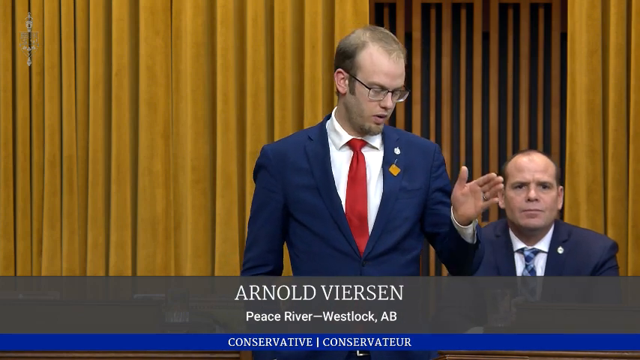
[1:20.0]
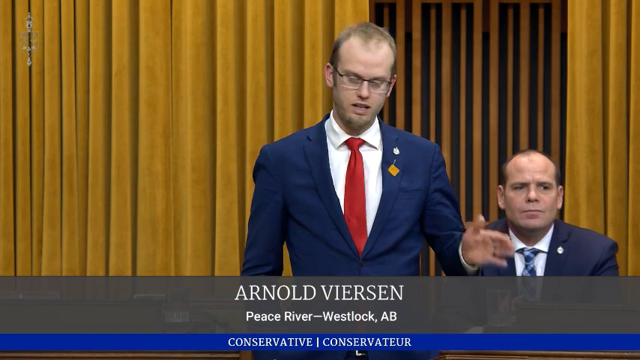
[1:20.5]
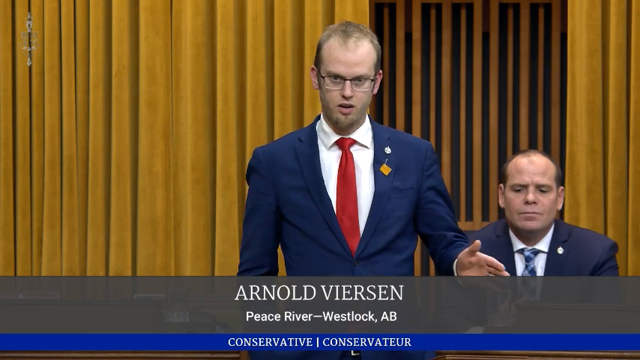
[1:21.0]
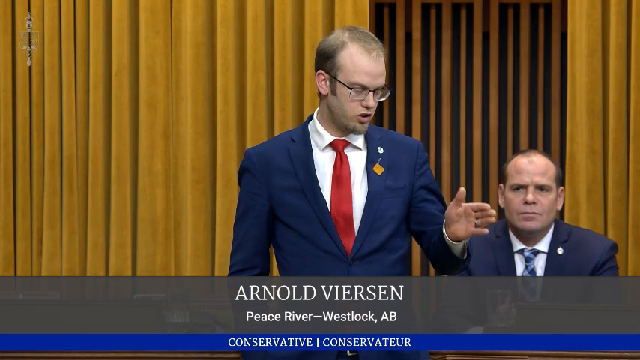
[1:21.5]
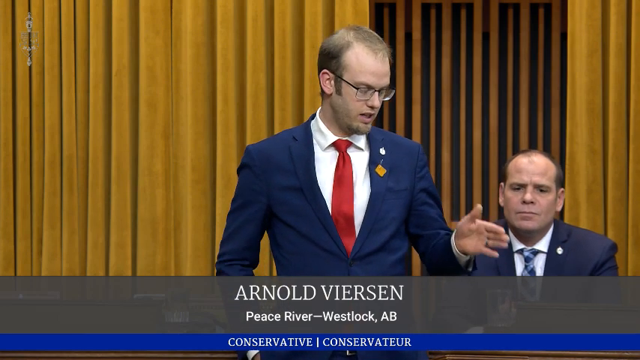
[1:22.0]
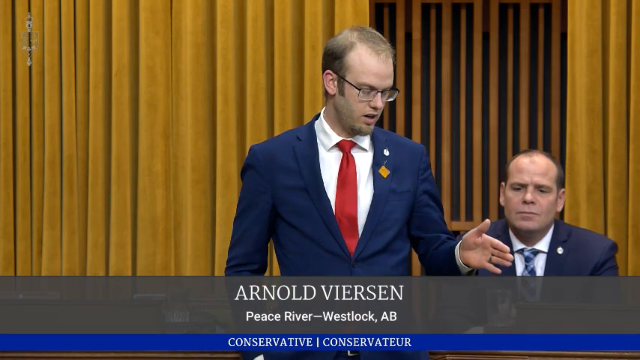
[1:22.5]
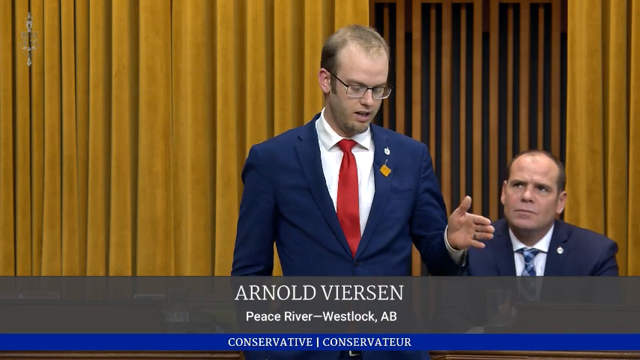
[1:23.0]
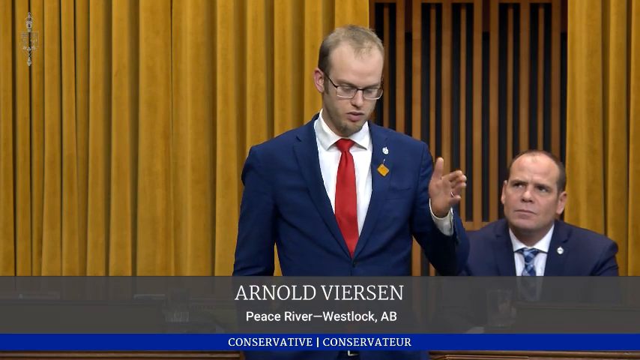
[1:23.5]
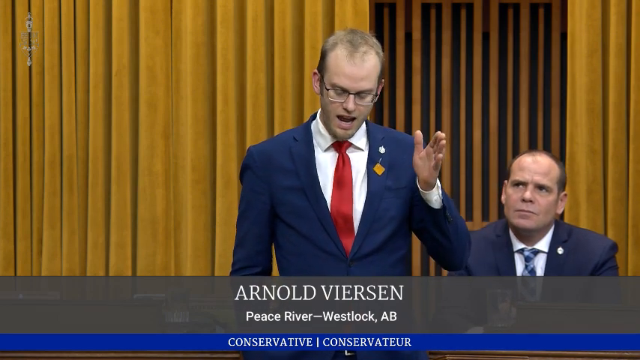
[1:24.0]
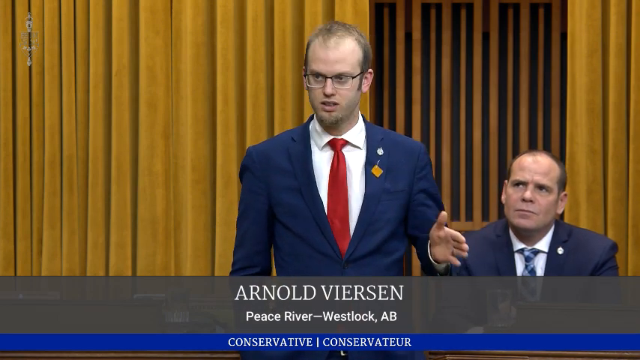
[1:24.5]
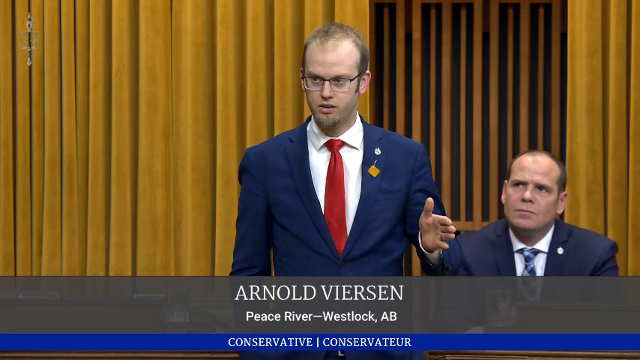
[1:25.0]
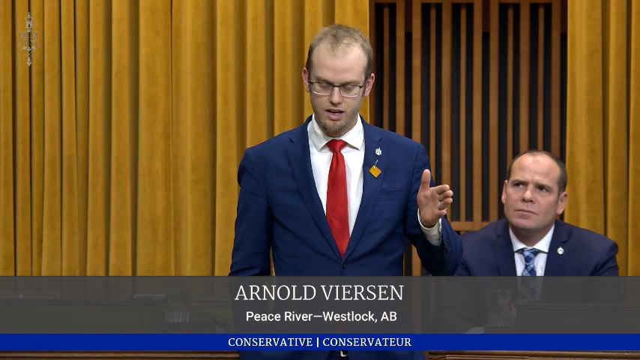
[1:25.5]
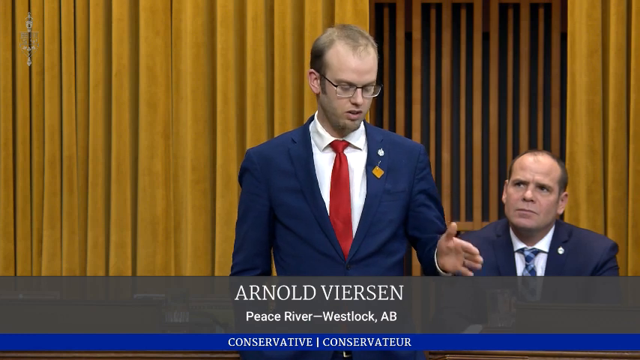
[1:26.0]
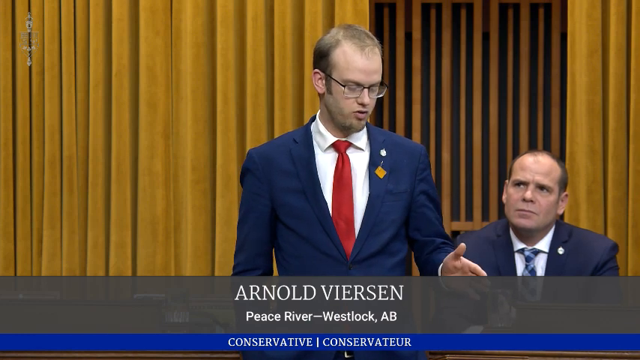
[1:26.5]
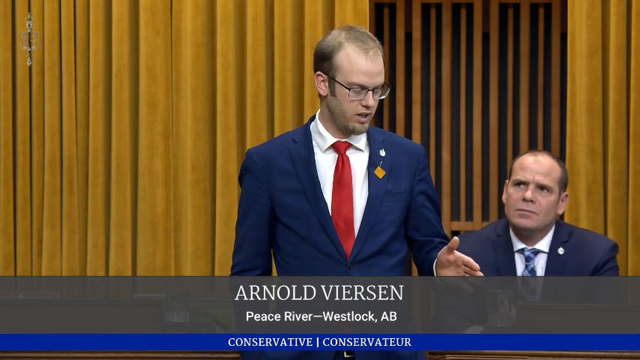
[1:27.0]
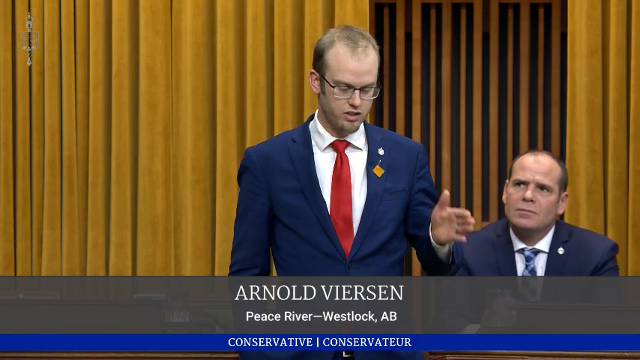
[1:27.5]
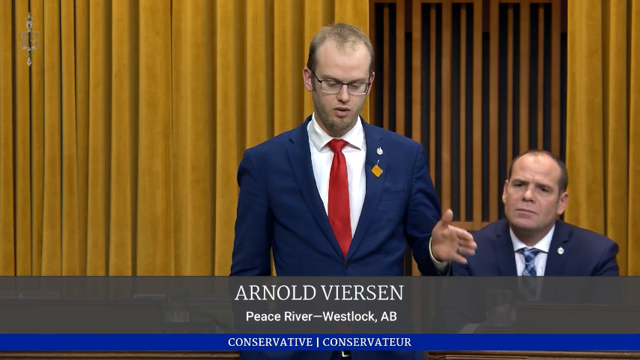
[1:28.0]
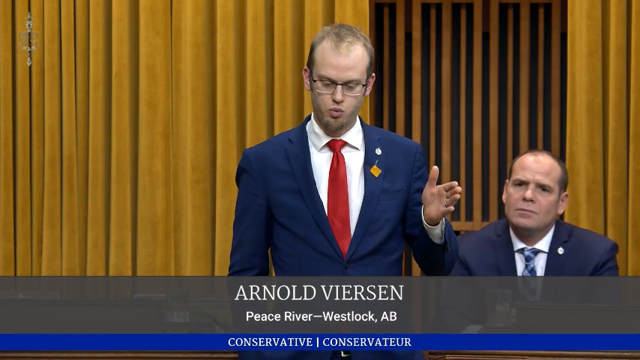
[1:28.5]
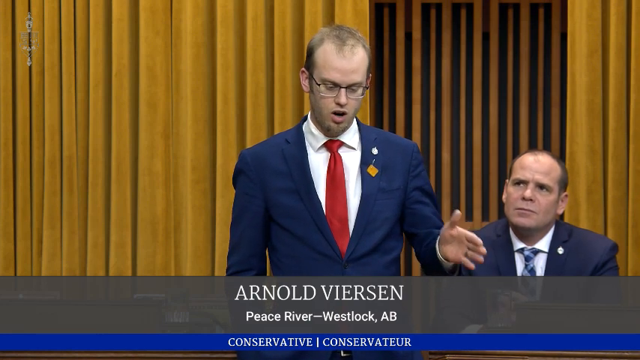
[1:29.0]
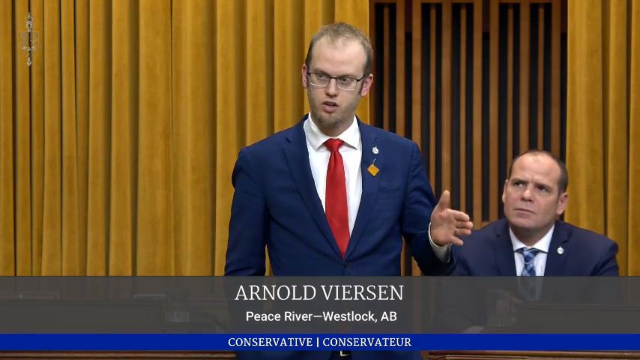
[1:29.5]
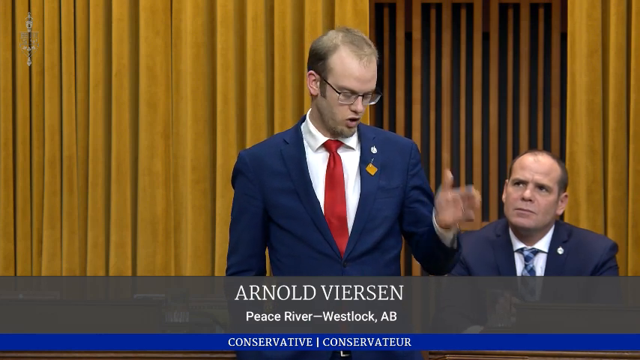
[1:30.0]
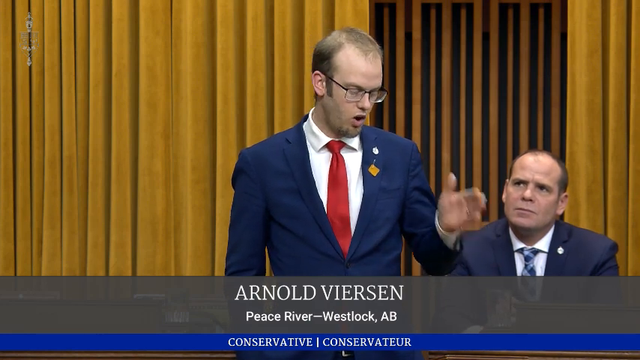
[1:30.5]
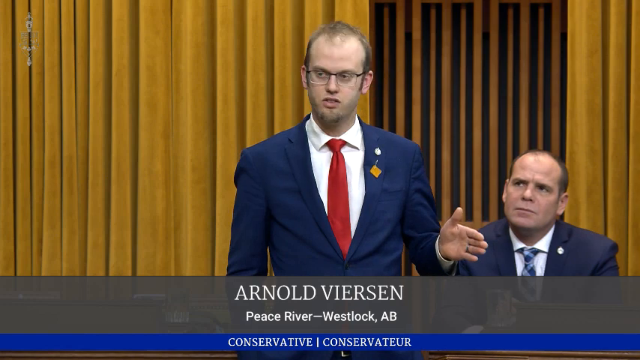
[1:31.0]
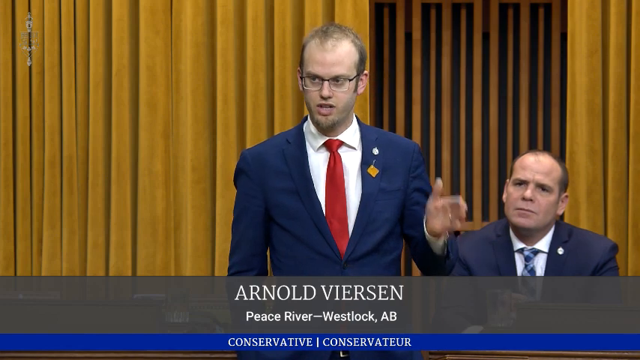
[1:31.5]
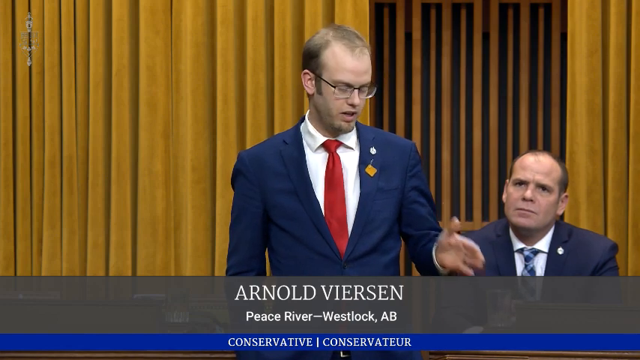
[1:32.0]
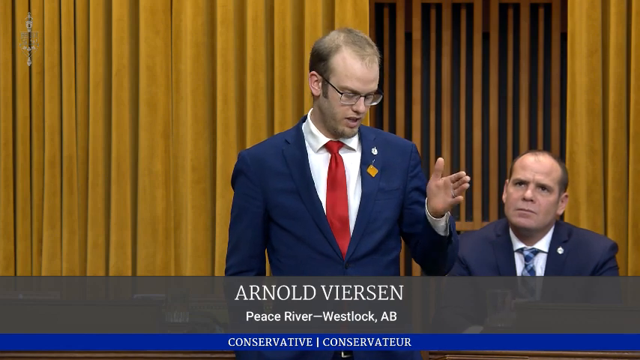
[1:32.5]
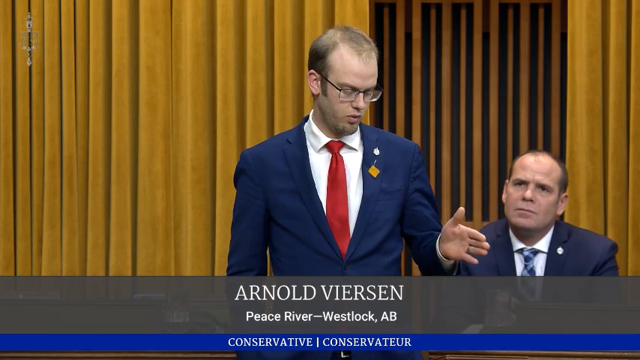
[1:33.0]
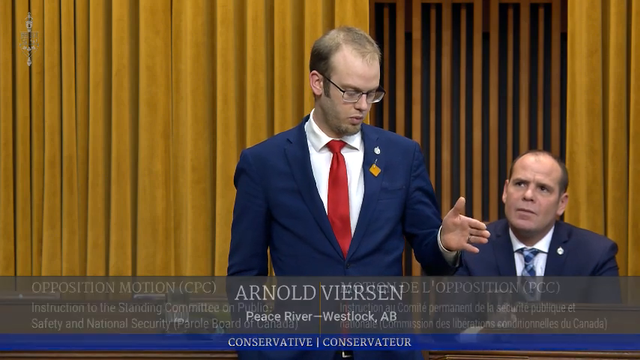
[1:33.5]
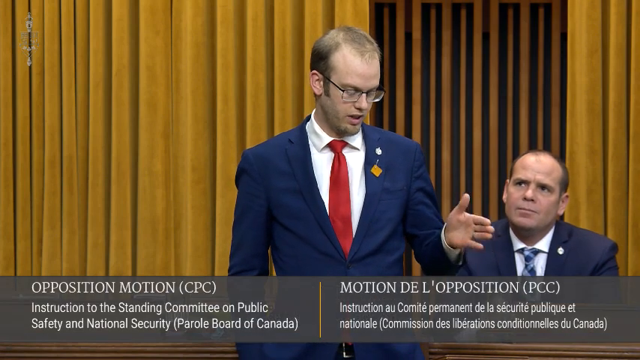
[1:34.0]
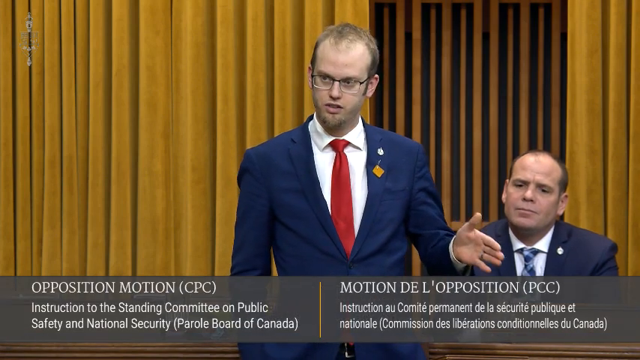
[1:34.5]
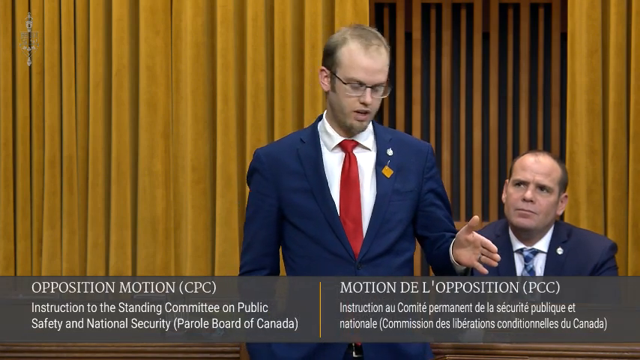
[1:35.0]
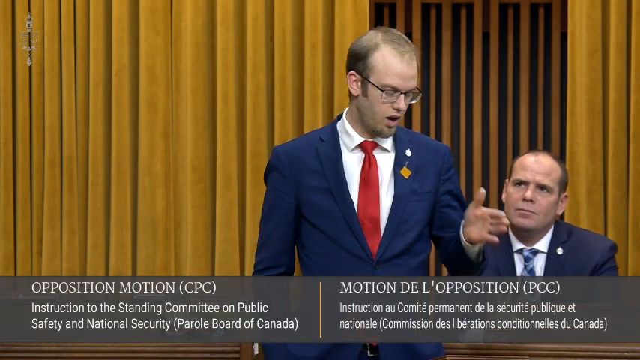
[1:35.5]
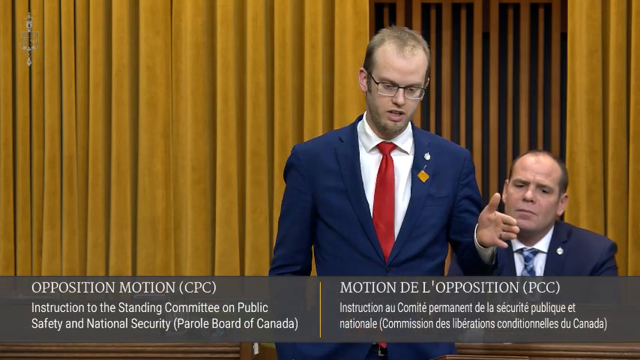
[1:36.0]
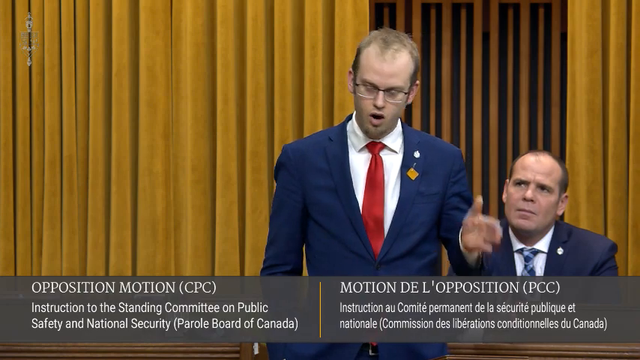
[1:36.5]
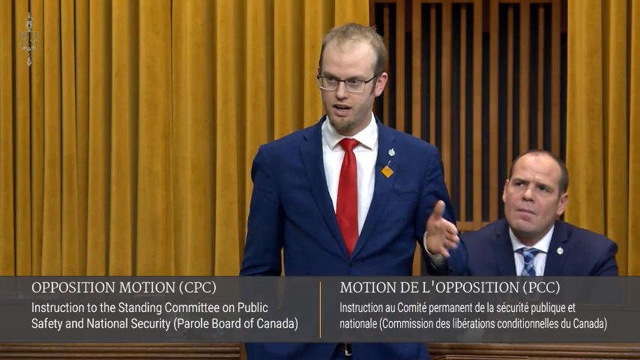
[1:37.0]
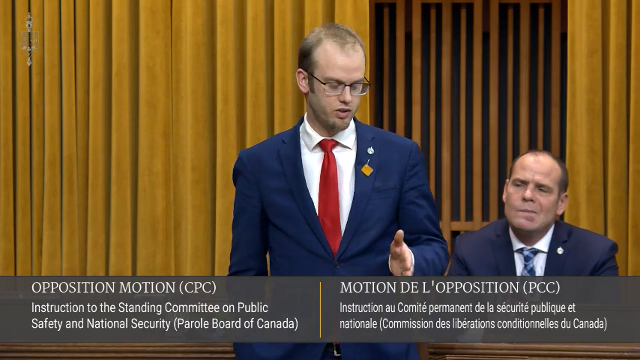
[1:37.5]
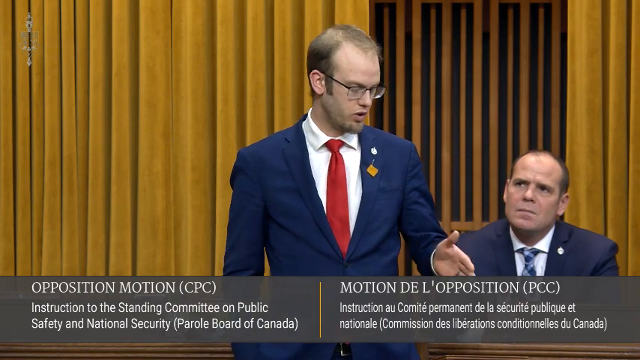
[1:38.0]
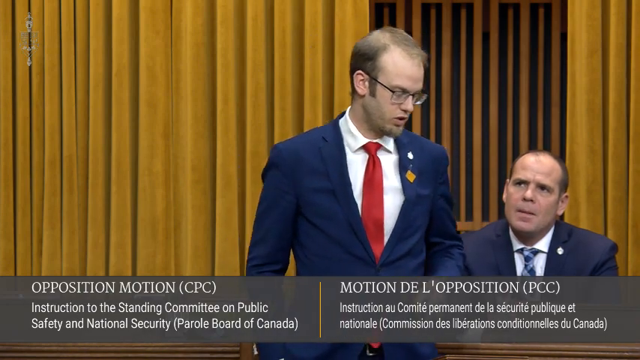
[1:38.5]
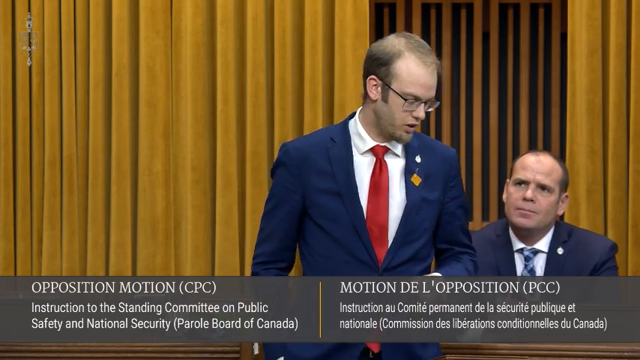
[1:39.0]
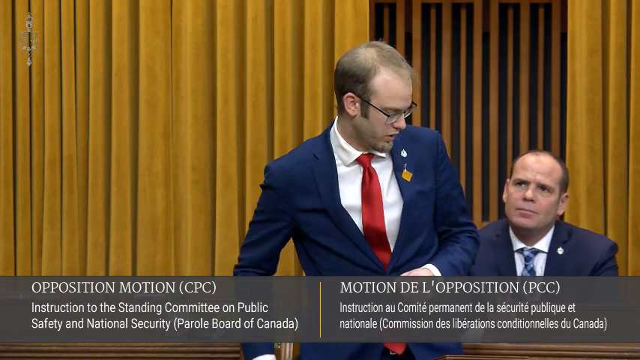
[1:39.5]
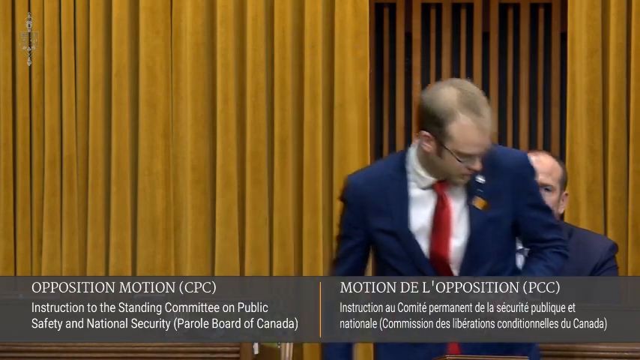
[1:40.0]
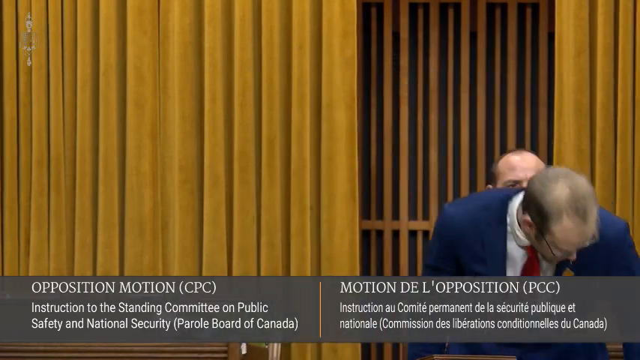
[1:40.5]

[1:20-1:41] Two Caucasian men are in front of a wall with black and brown wooden detail and a big golden, satiny-looking curtain. One man is standing up and speaking very passionately, using many hand motions. He wears glasses, a blue suit with a white undershirt and a red tie, and some sort of gold and silver pin on his suit jacket. While he speaks, a blackish-gray banner at the bottom of the screen shows white text reading "Arnold Bjergsen" in all caps, with smaller white text below reading "Peace River-Westlake AB". He moves his left hand up and down frequently and very purposefully. A man sitting behind him, slightly to the right of the screen, looks up at him; he is also Caucasian and wears a dark suit with a white undershirt and a blue patterned tie, and he consistently looks up attentively at the man standing slightly in front of him. The speaking man then begins to sit down in his chair.